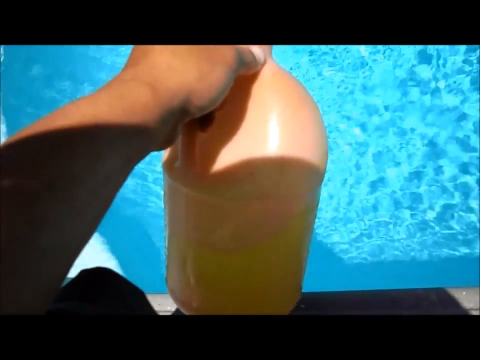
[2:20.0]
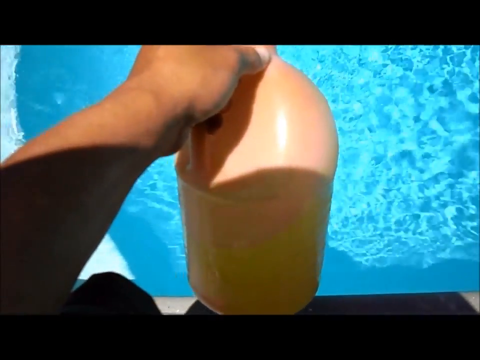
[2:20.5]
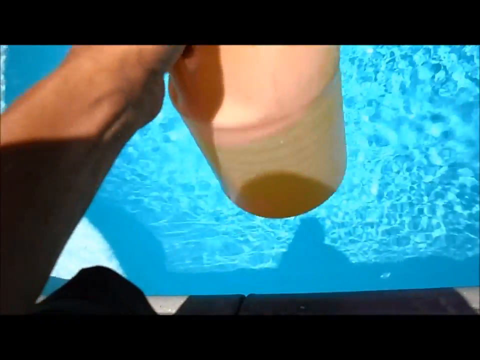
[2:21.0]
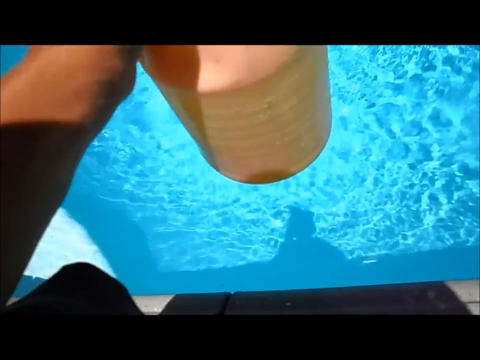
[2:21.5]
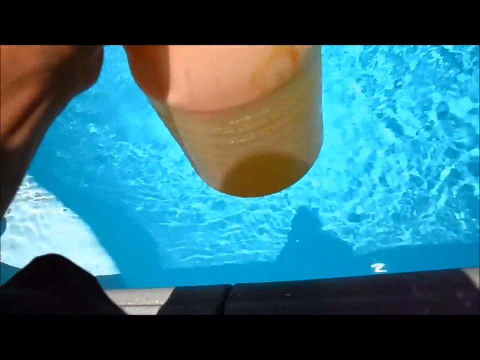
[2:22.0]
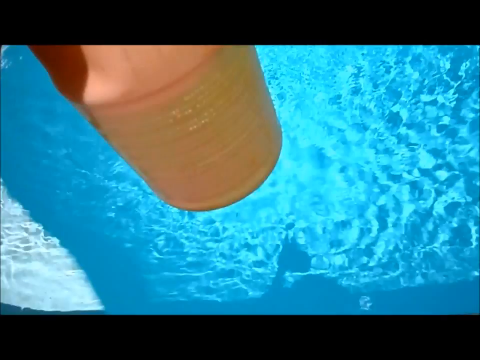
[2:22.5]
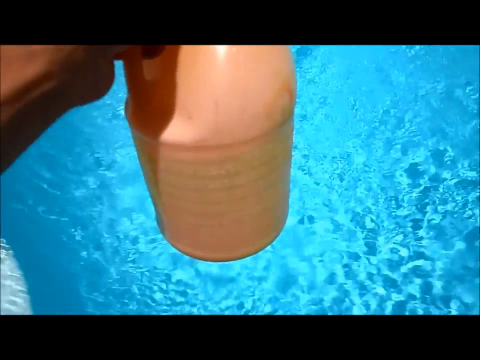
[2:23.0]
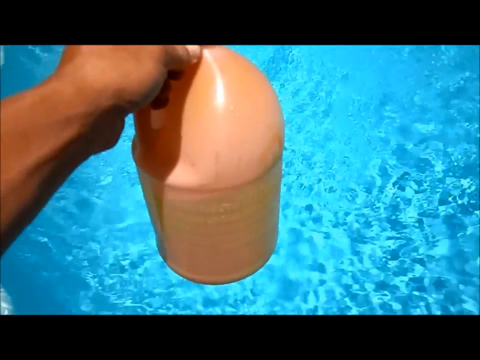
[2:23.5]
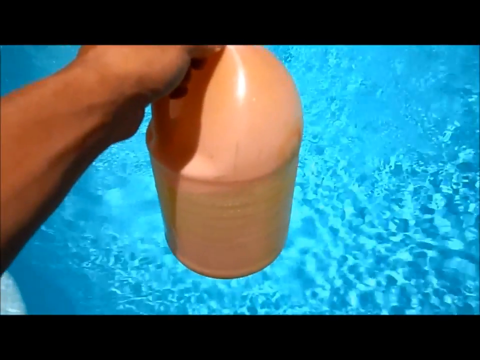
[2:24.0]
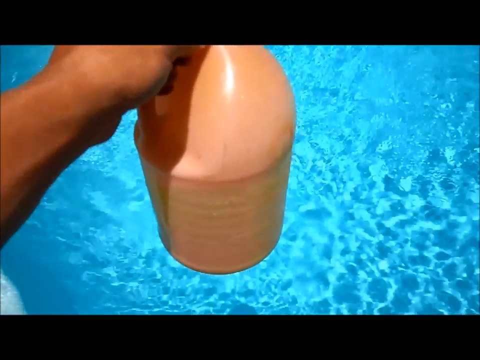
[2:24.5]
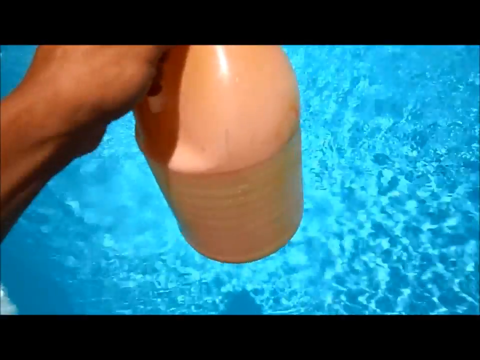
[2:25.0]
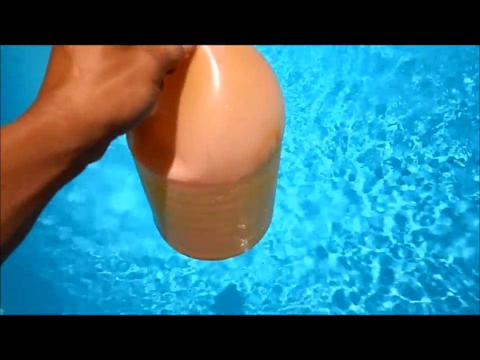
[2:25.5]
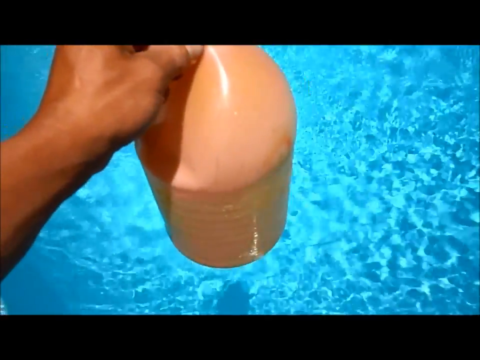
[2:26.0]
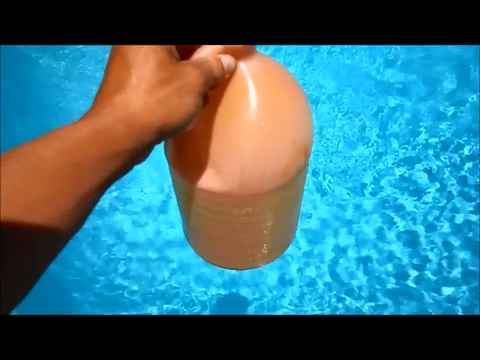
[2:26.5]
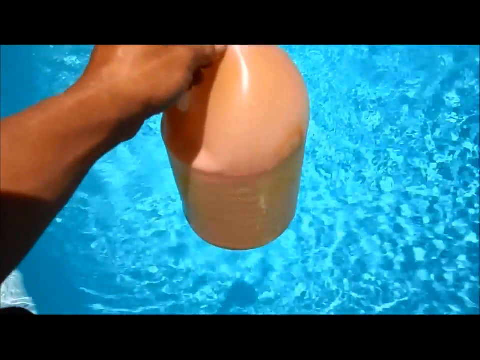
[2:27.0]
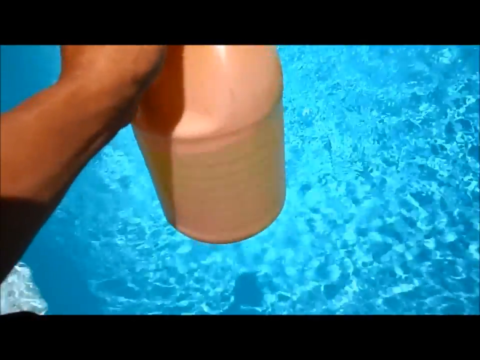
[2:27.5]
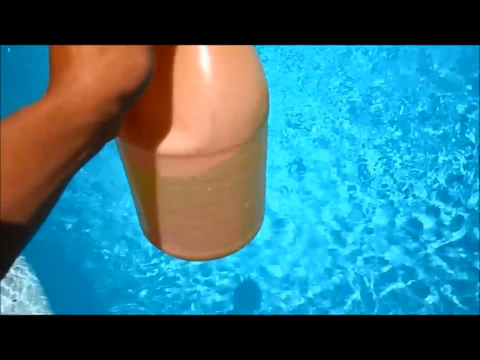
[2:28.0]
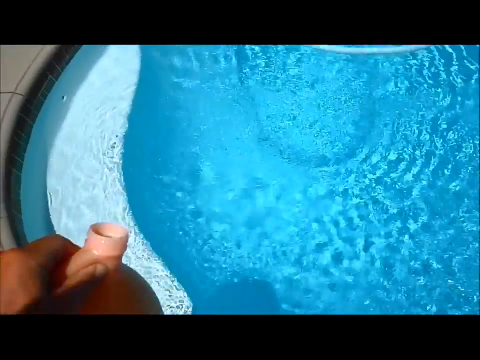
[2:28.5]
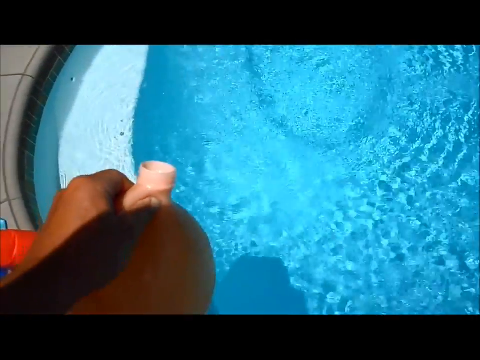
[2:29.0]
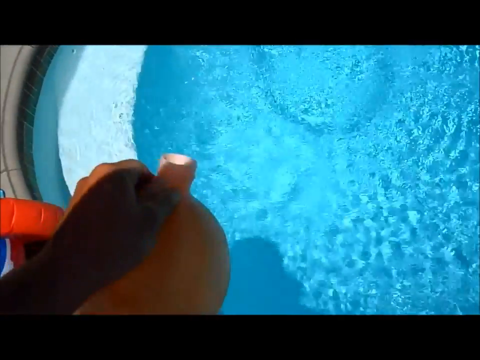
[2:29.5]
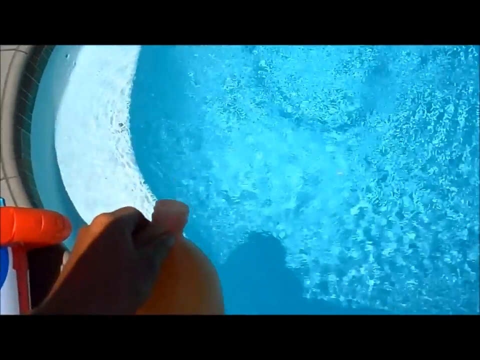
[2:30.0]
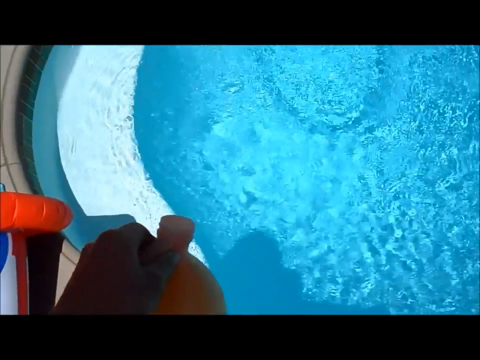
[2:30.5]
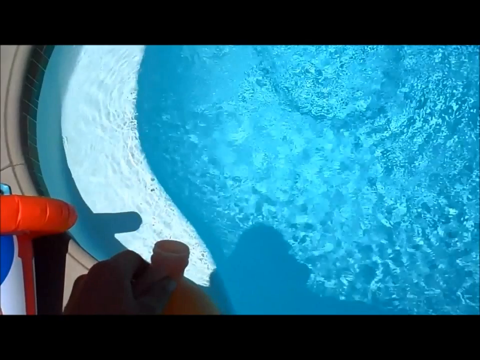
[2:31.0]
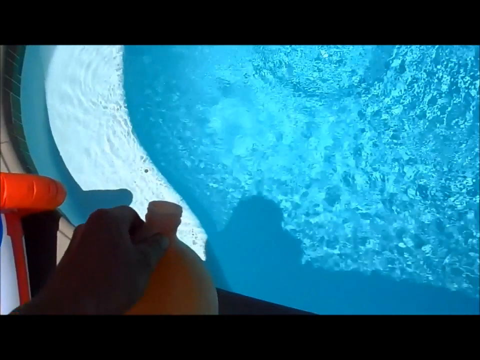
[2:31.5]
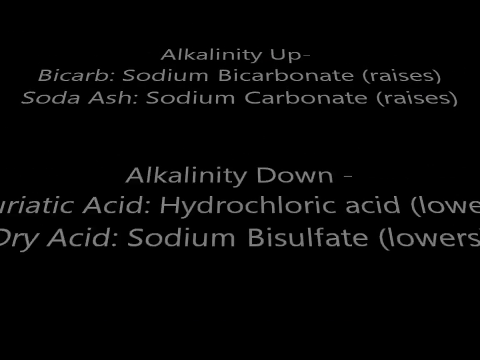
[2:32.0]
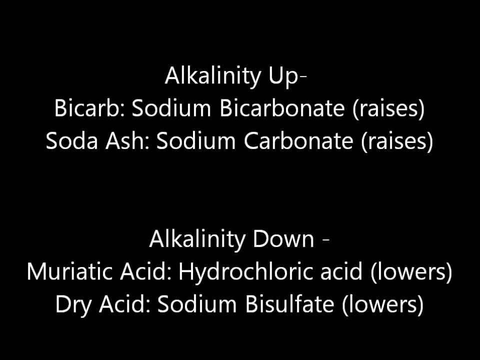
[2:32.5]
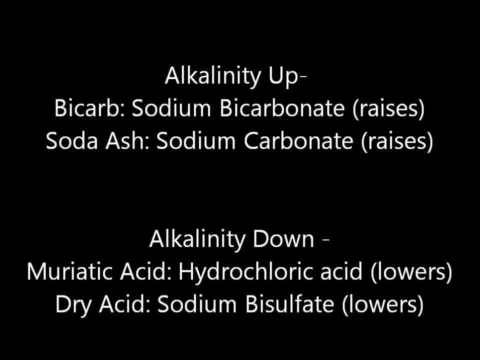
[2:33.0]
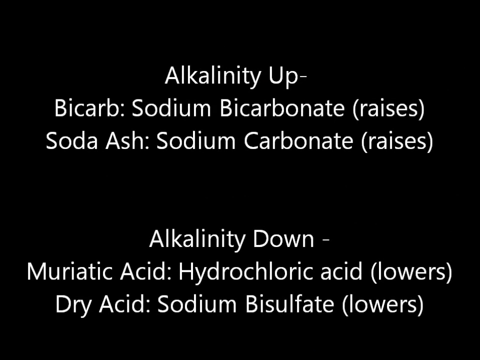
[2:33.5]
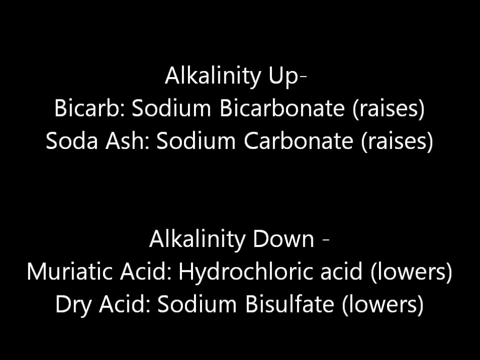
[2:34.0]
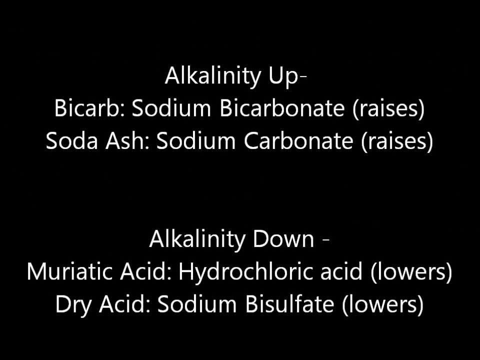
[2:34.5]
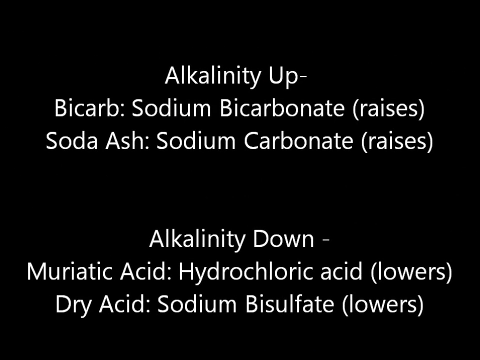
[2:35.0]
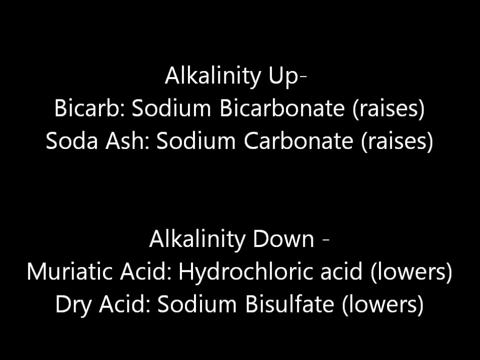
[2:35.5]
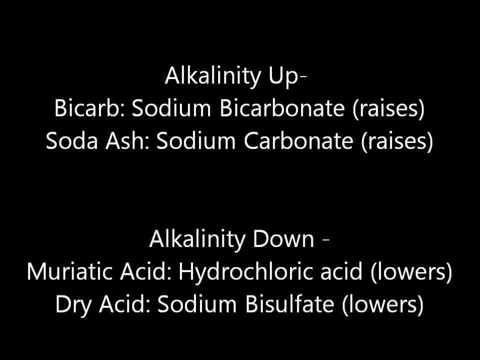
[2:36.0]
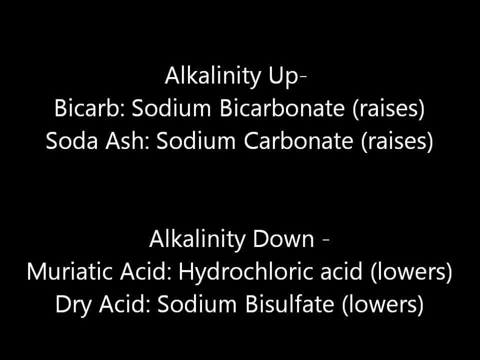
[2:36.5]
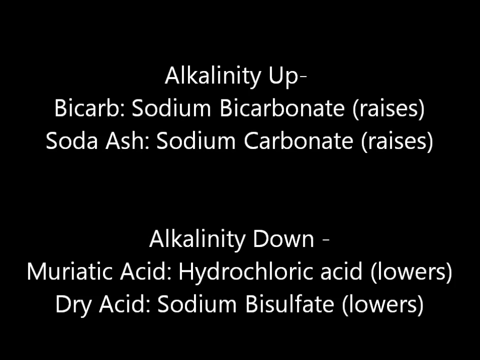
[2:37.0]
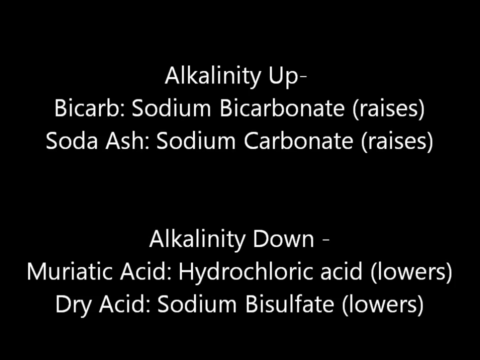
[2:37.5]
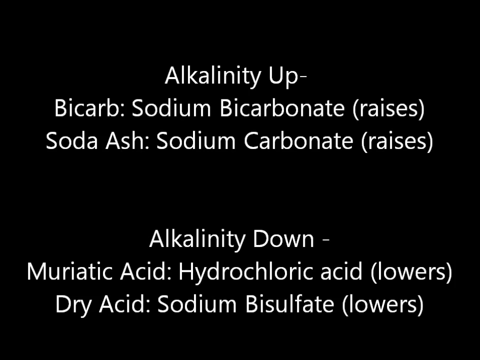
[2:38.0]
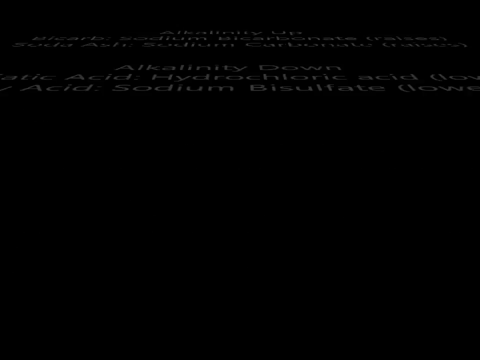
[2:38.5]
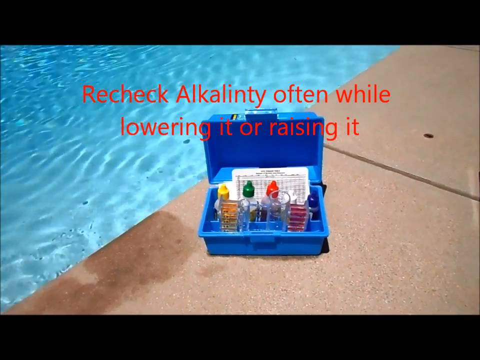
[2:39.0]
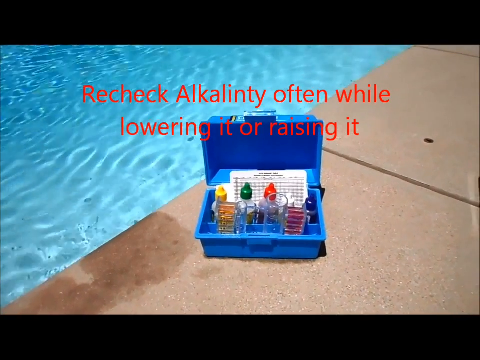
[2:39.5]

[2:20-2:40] The man again holds the single jug, moving it around, and from the way it moves the jug is evidently half full. The shot changes to the man pouring the liquid into the pool, or about to, tilting the jug. Something red is to the left of him, but it cannot be made out. The video then goes to a black screen filled with white words and letters giving information, followed by a quick shot of the blue box with all the chemicals in it again.